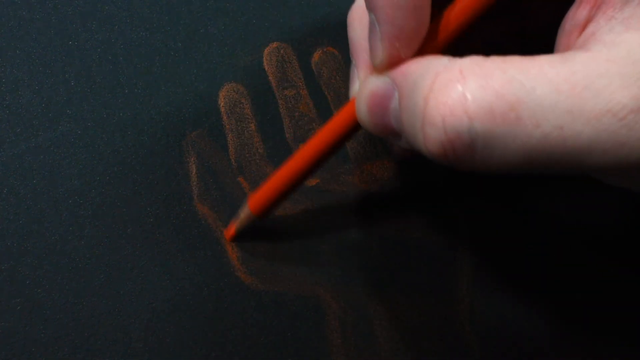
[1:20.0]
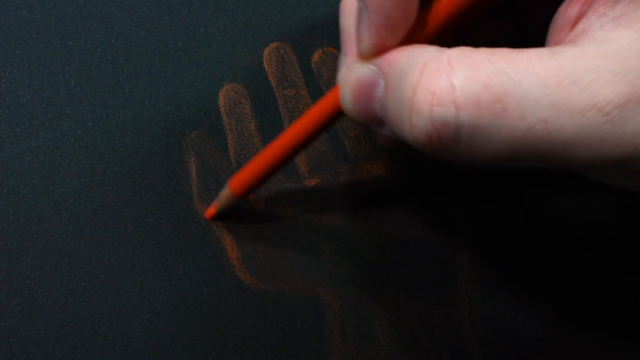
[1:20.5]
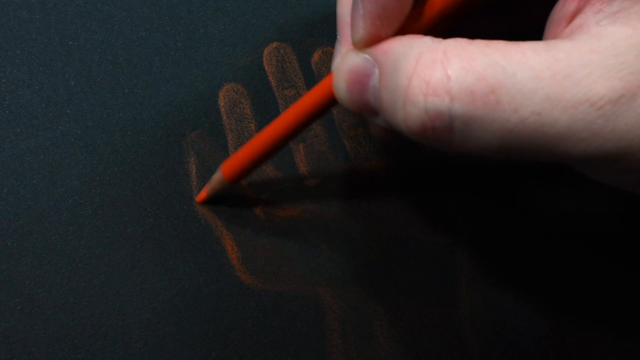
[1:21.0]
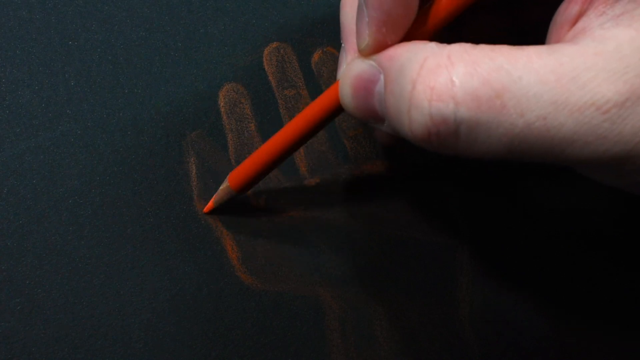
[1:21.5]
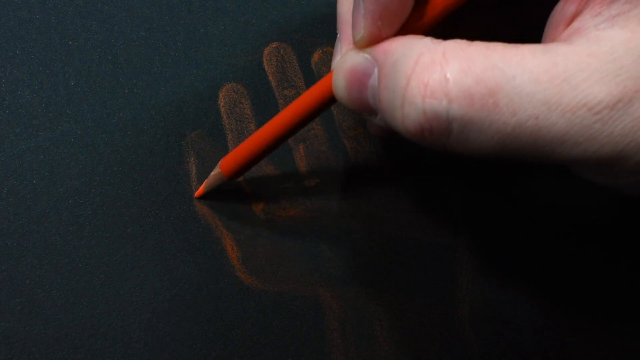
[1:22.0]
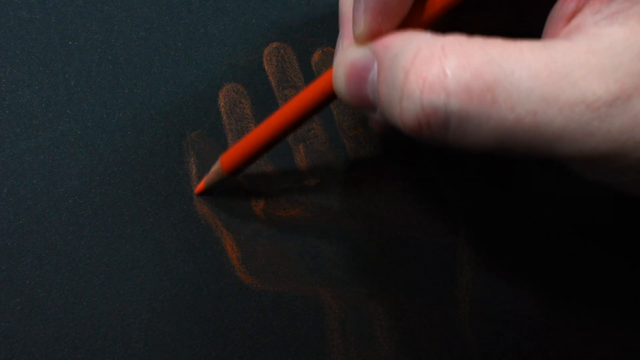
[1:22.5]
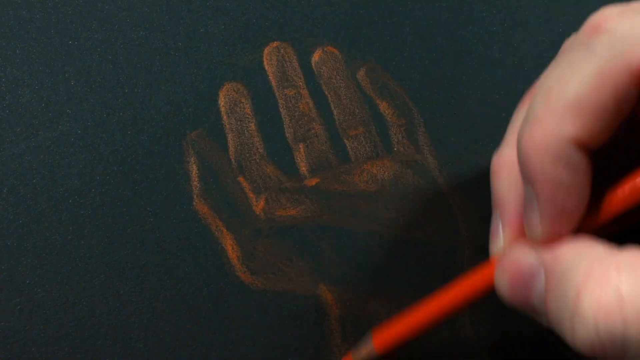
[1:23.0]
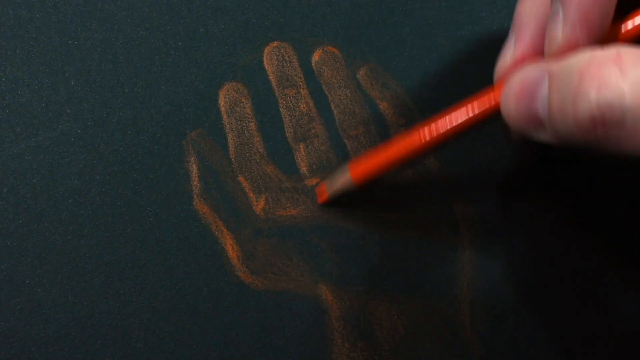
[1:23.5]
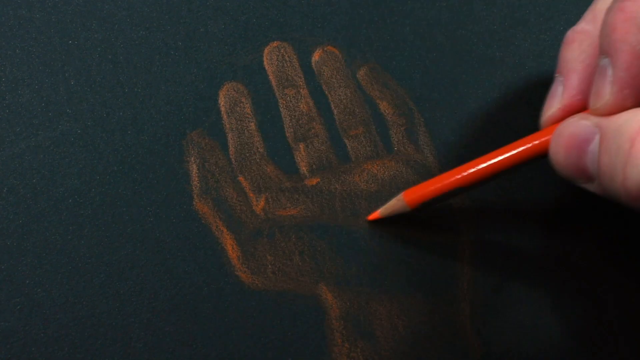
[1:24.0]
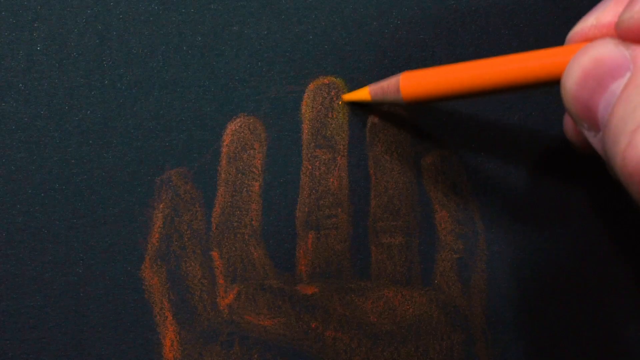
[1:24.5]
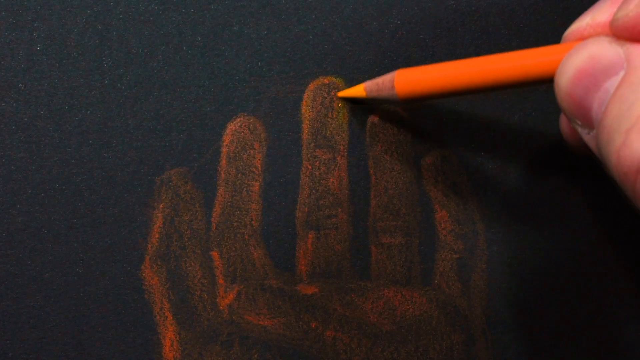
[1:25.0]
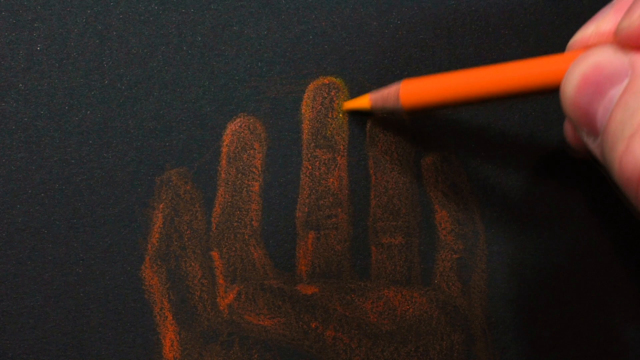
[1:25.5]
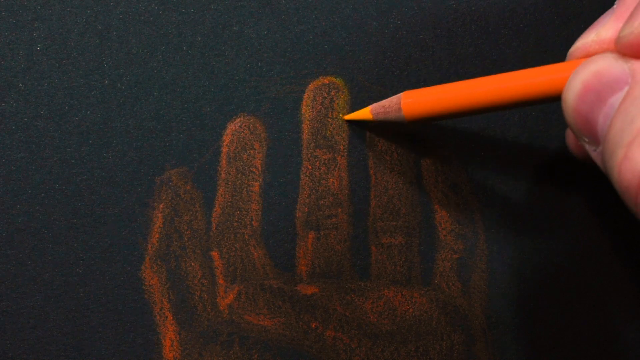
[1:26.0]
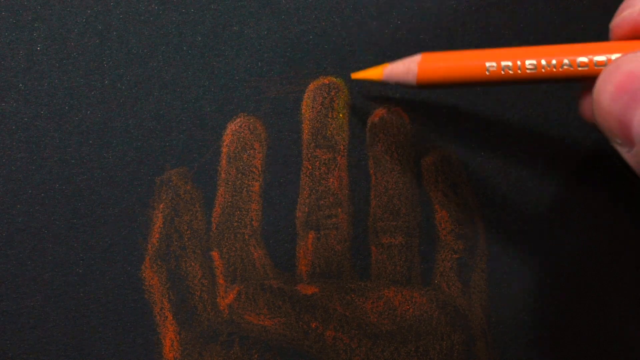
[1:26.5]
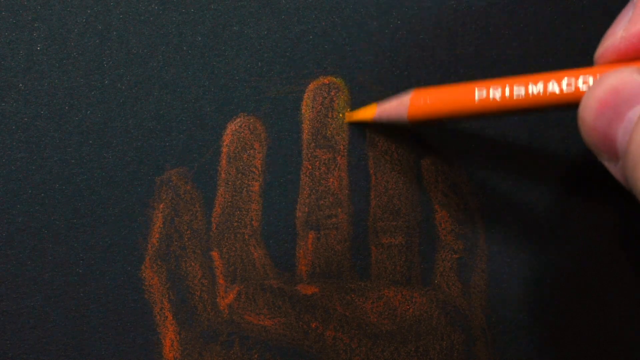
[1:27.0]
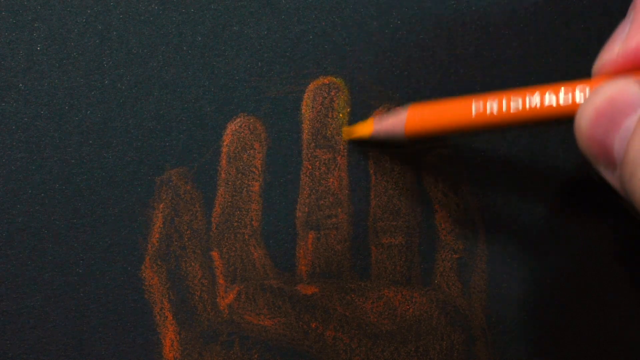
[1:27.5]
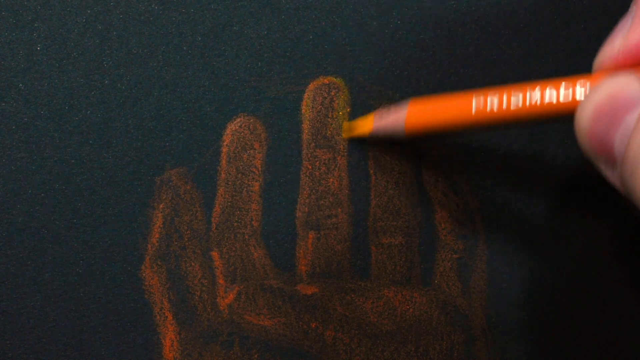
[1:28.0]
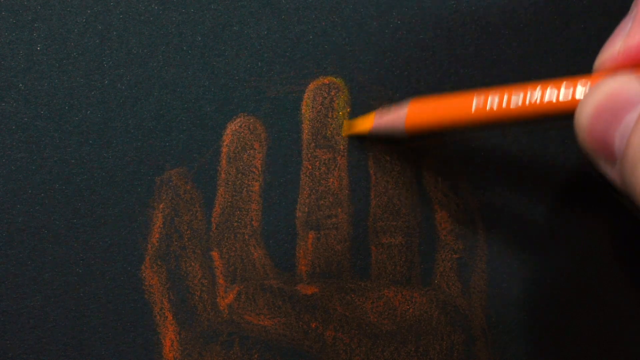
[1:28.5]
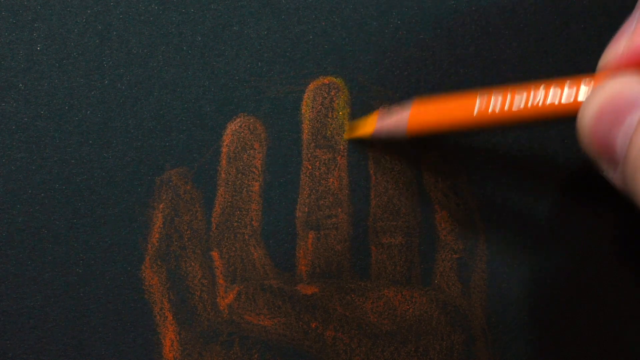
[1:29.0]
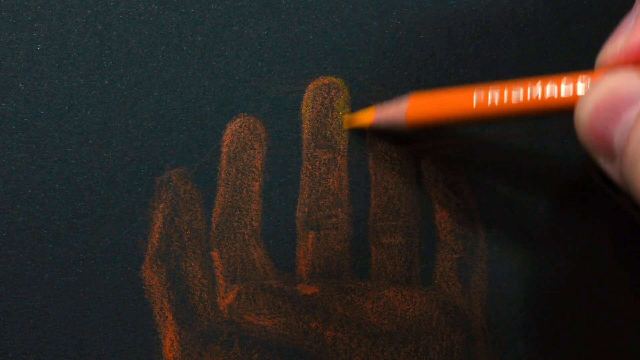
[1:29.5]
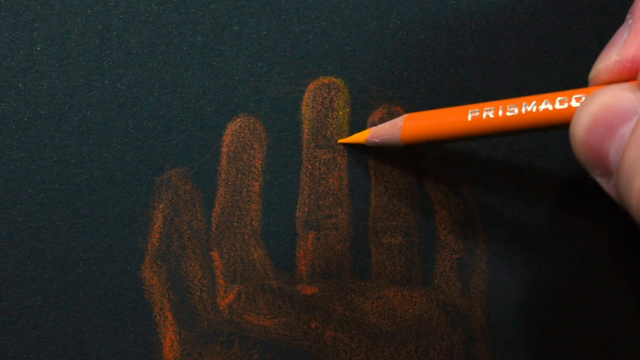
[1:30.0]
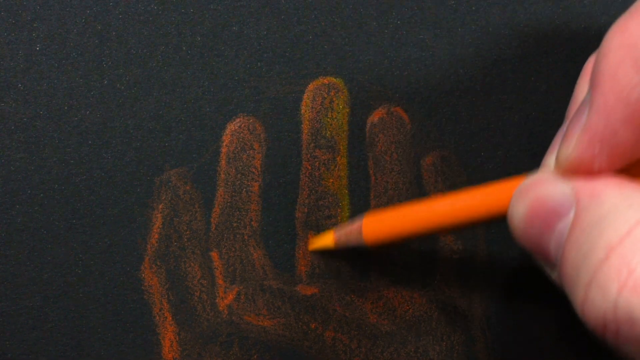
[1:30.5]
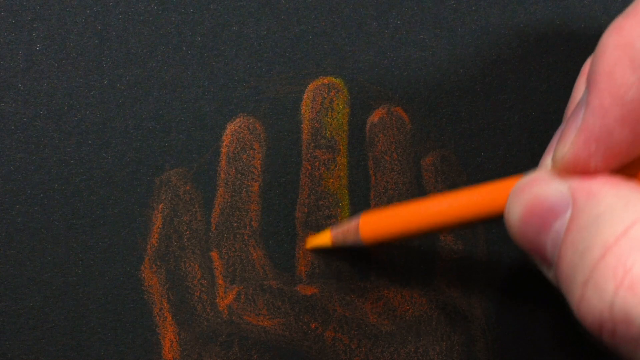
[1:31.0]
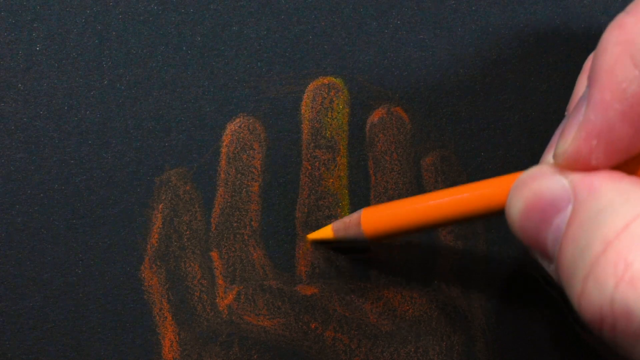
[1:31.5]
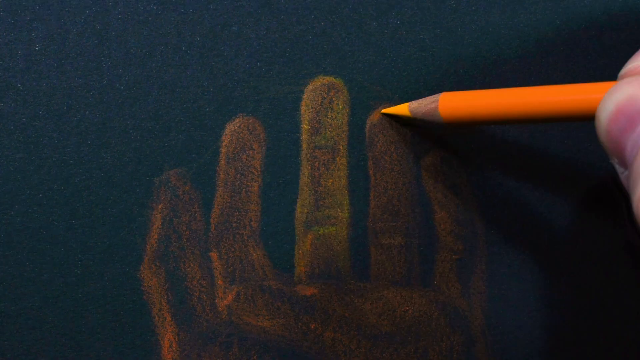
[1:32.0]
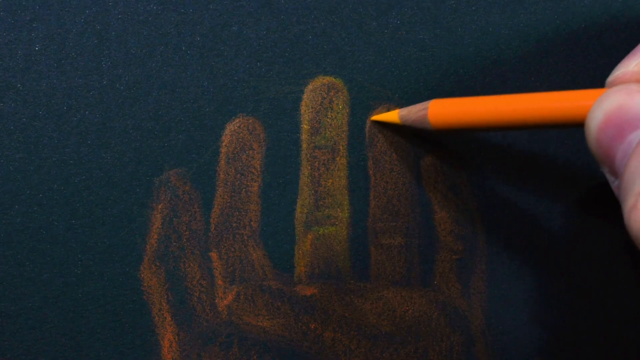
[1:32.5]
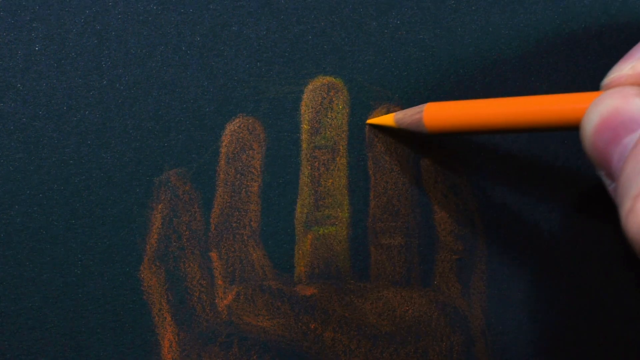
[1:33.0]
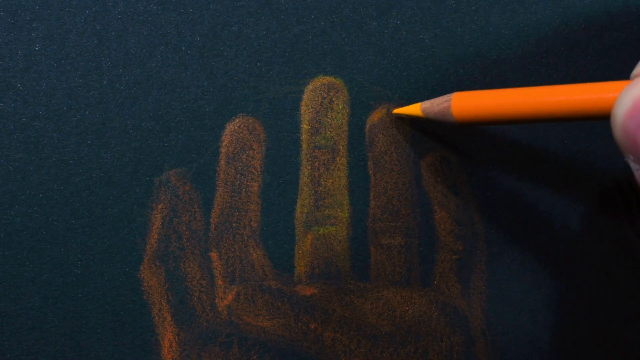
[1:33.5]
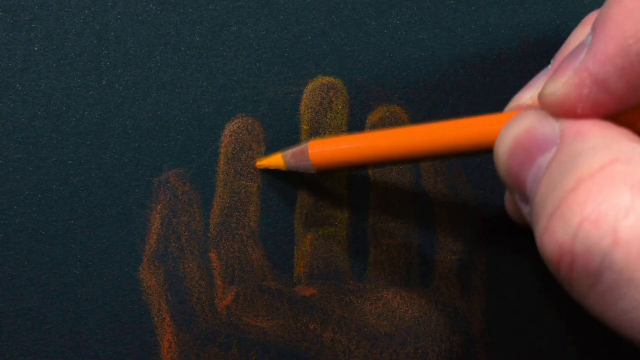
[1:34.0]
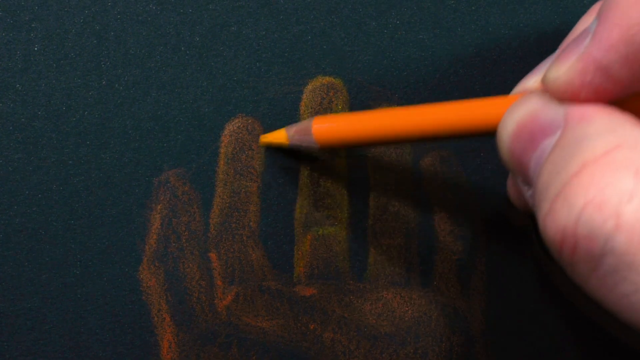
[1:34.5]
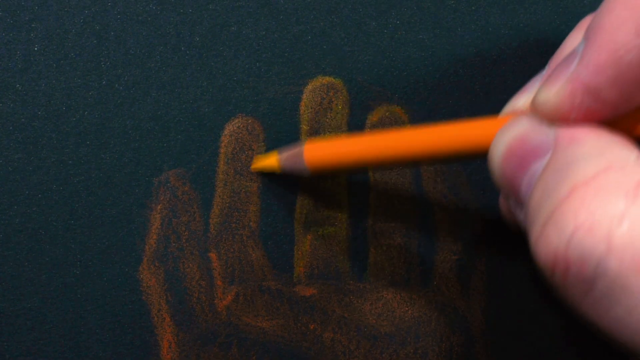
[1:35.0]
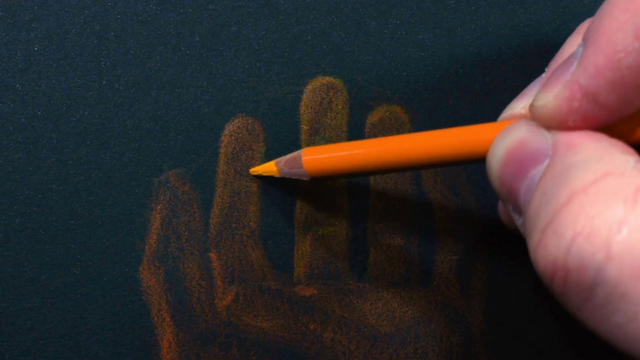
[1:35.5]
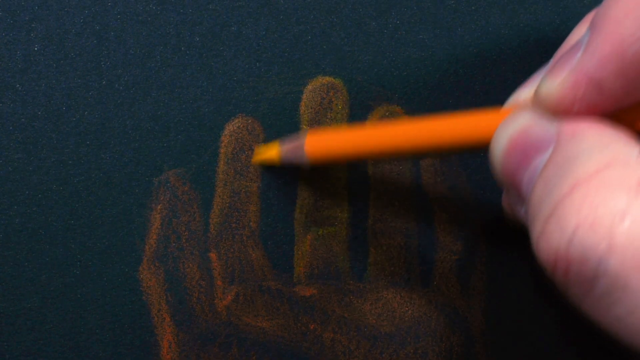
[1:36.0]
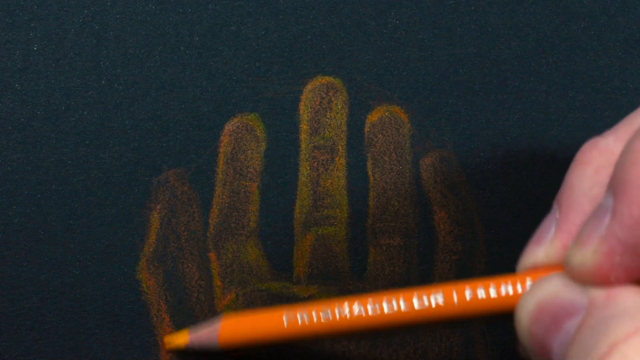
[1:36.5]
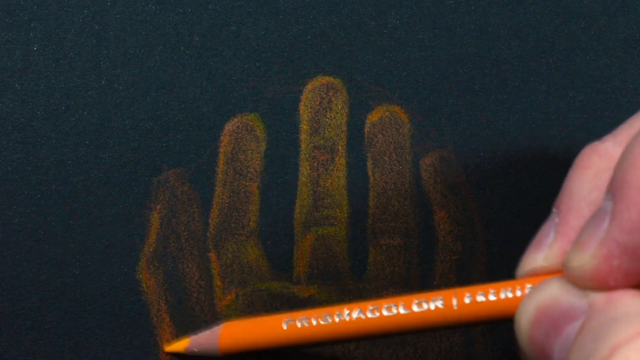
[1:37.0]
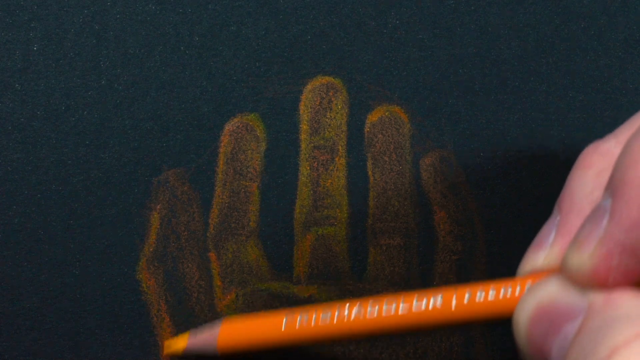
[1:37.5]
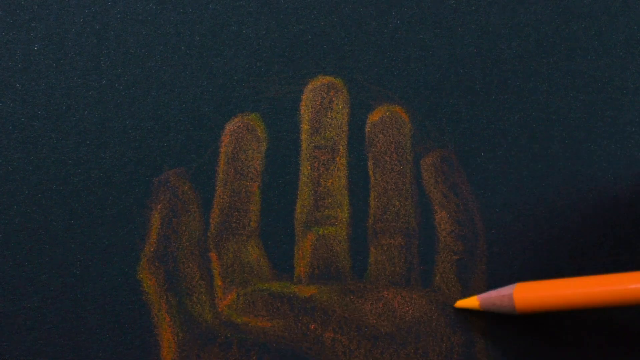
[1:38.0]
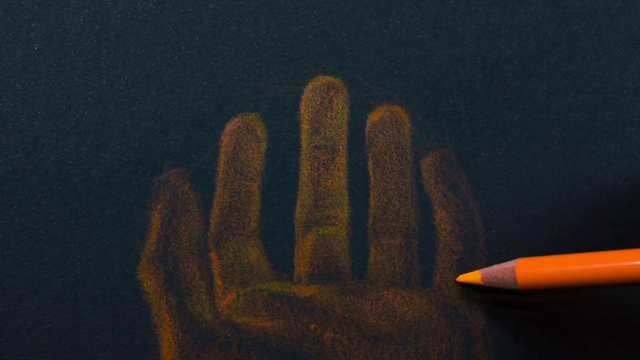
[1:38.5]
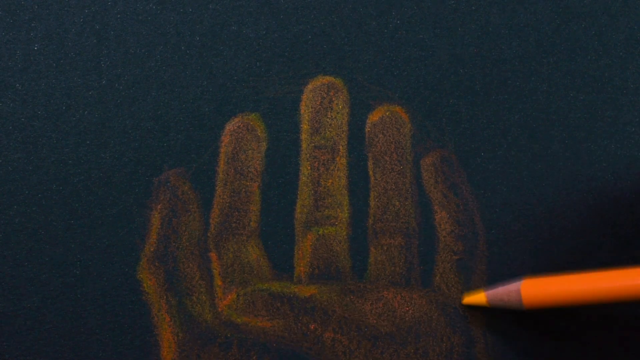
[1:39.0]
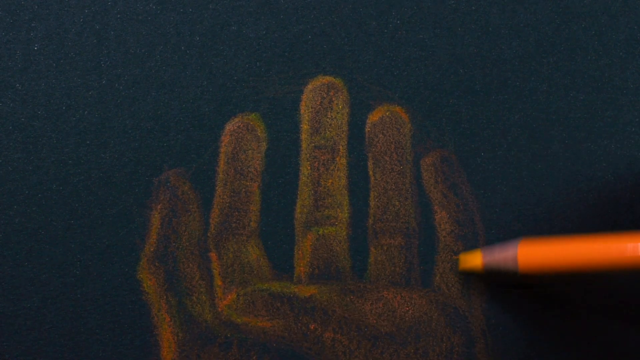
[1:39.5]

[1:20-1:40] Four short, wide candles are shown. The man picks up a matchbox and lights one candle, then lights the rest from that candle. He places the candles around a book on a glass table; the book has dark black paper with white spirals on the left-hand side. He picks up a feather pen and writes a note on the front of the book, which comes out in white, and at the end of the quote he signs his signature. He then has three colouring pencils, colours a small portion of the black surface, and colours two other colours on the white surface. He aims to outline a picture.